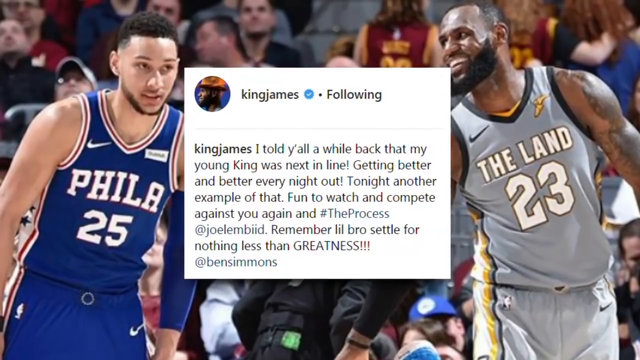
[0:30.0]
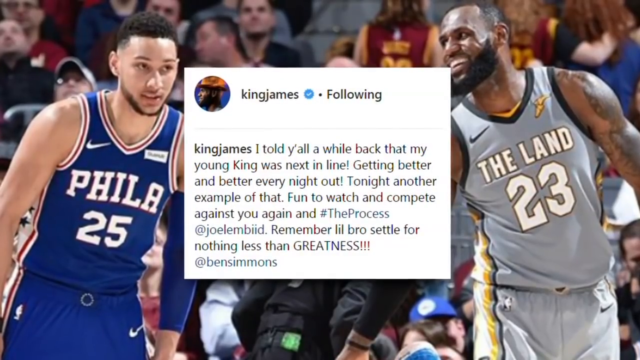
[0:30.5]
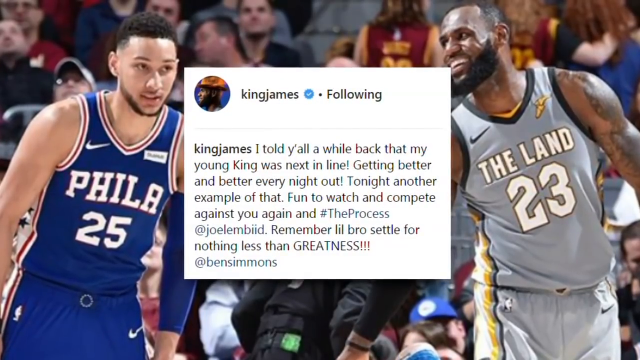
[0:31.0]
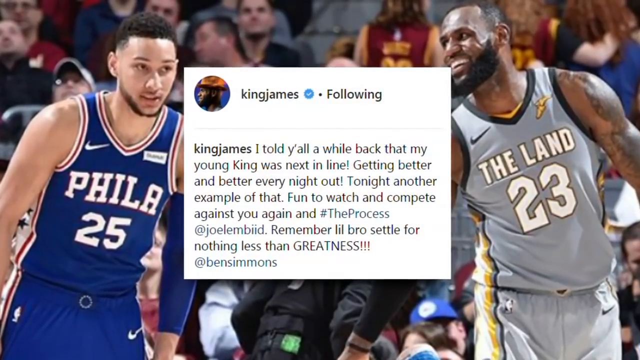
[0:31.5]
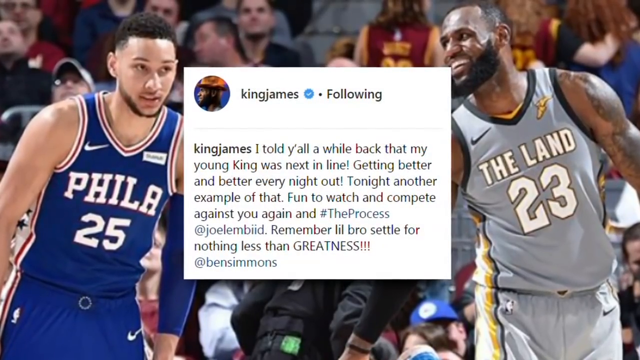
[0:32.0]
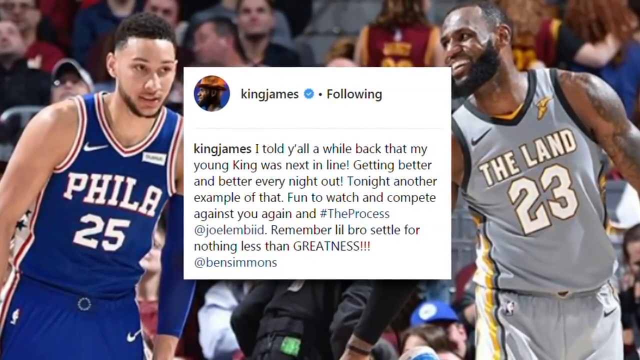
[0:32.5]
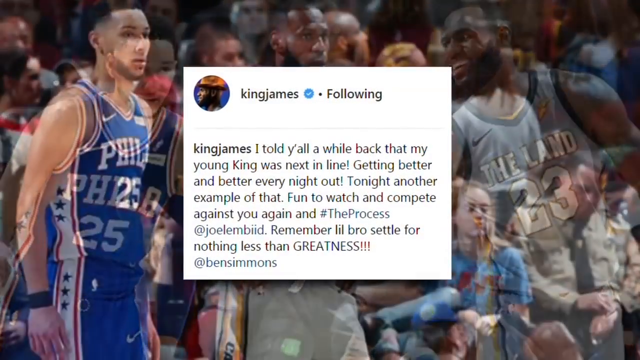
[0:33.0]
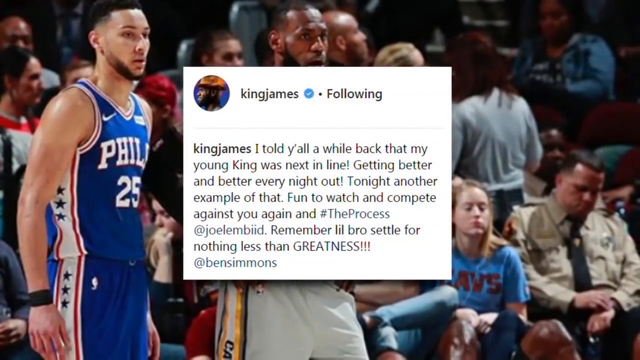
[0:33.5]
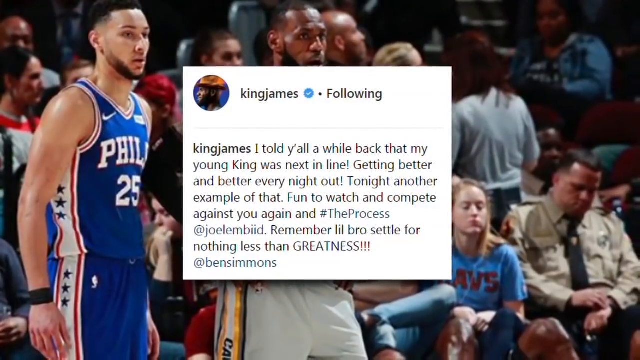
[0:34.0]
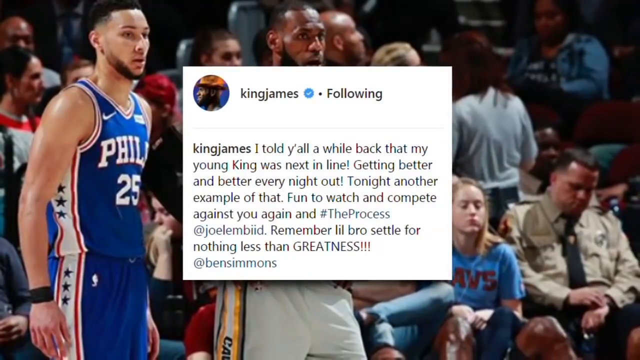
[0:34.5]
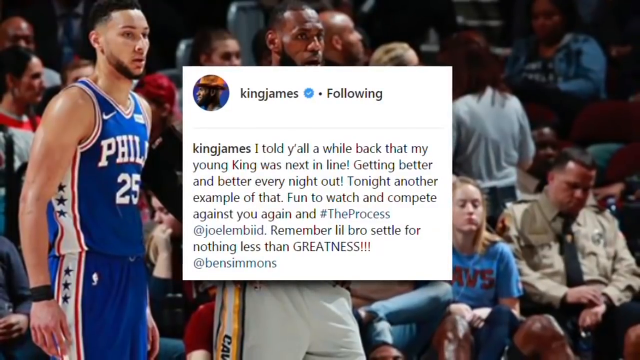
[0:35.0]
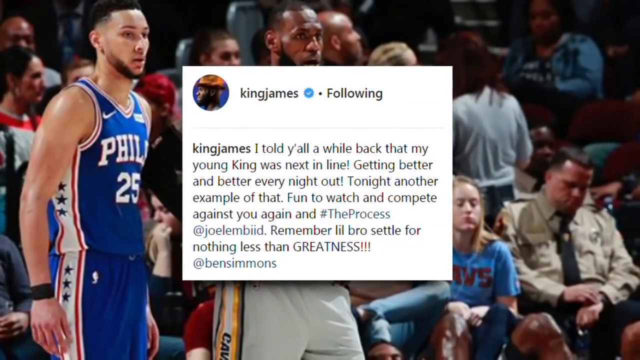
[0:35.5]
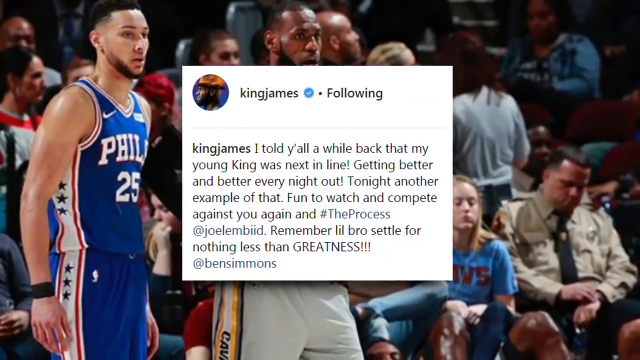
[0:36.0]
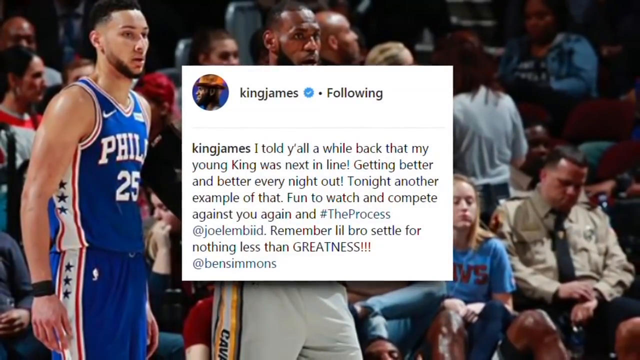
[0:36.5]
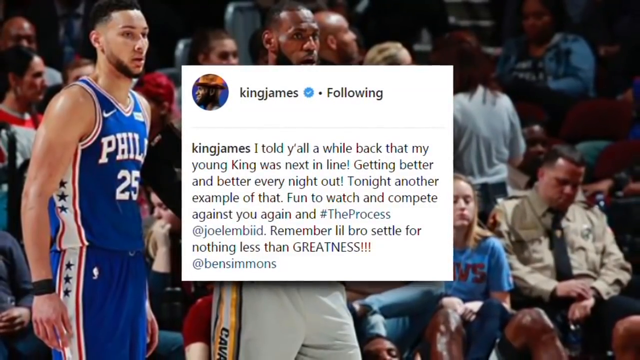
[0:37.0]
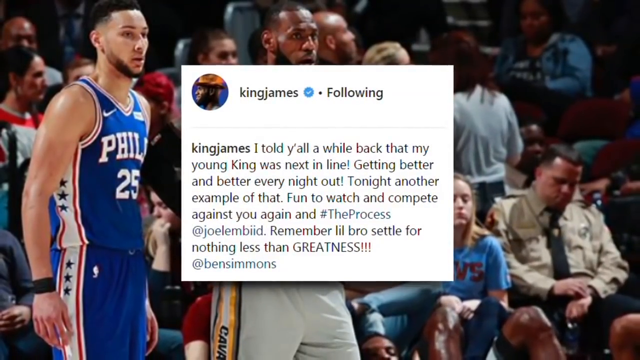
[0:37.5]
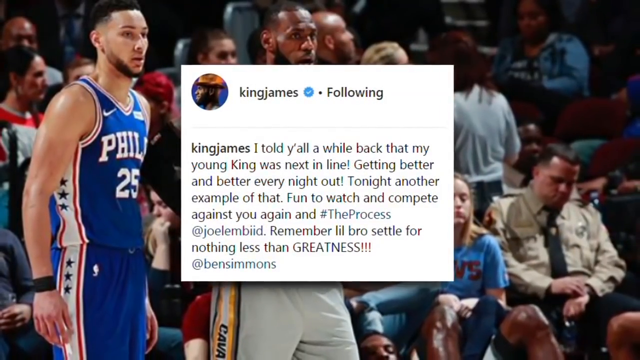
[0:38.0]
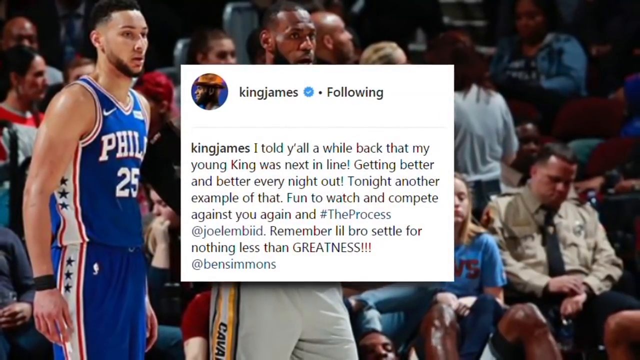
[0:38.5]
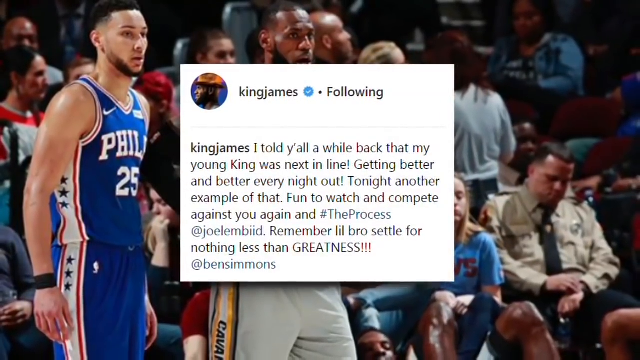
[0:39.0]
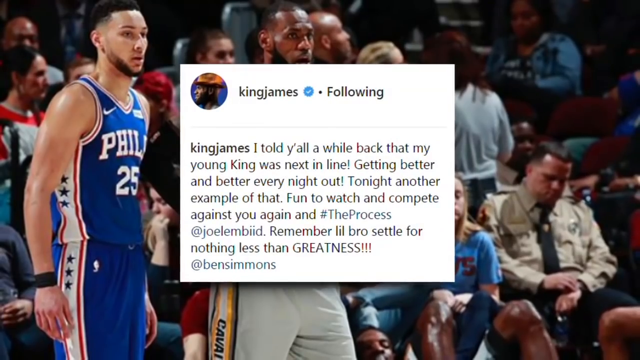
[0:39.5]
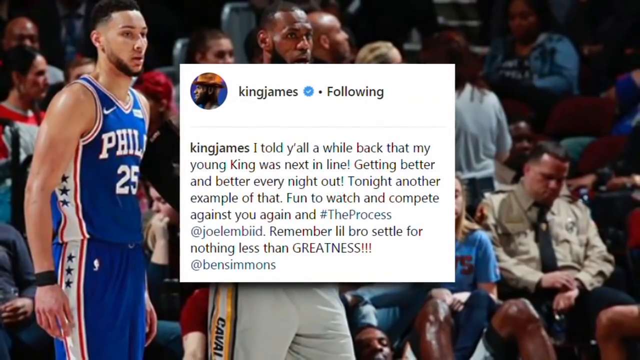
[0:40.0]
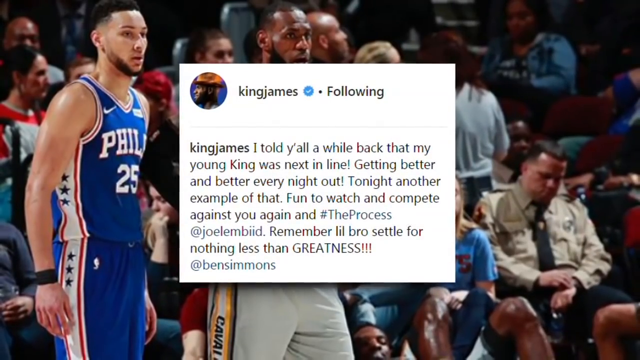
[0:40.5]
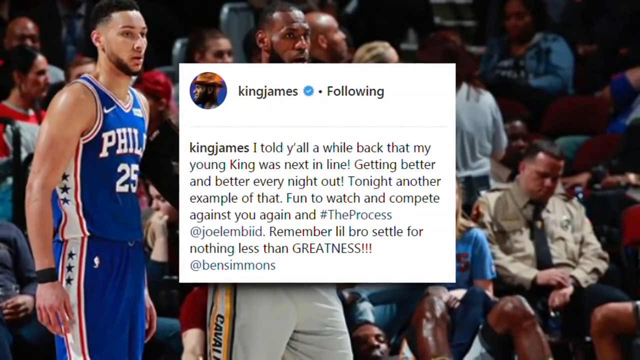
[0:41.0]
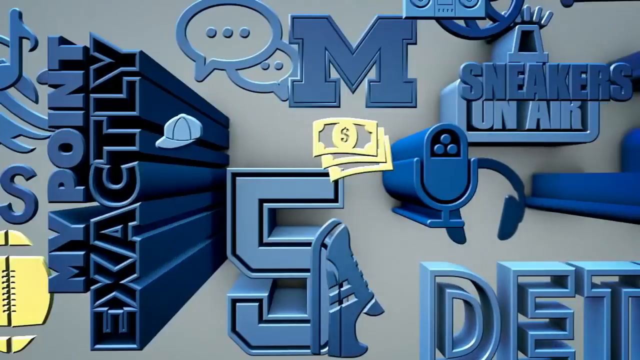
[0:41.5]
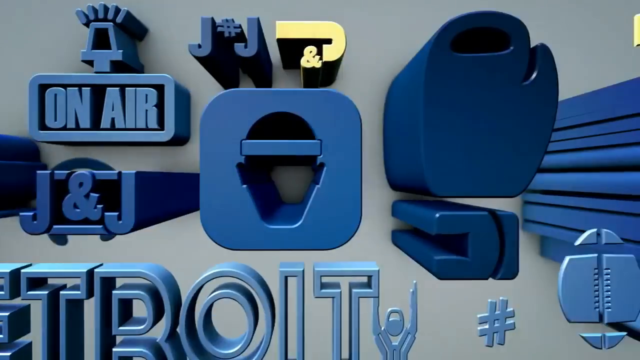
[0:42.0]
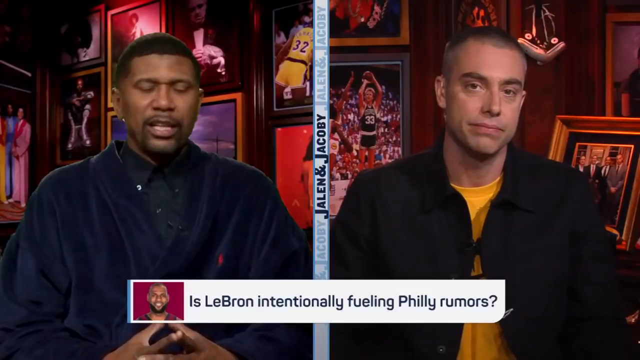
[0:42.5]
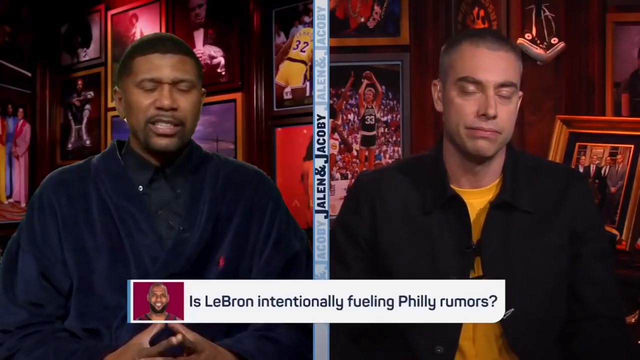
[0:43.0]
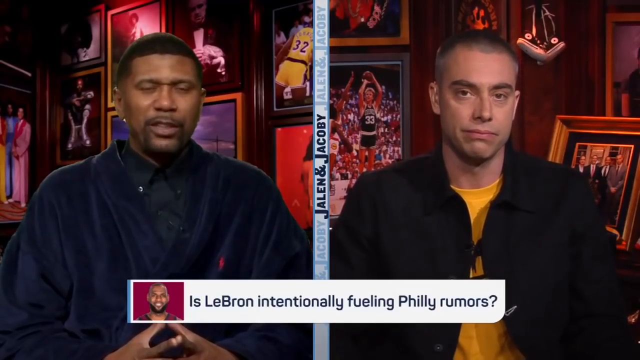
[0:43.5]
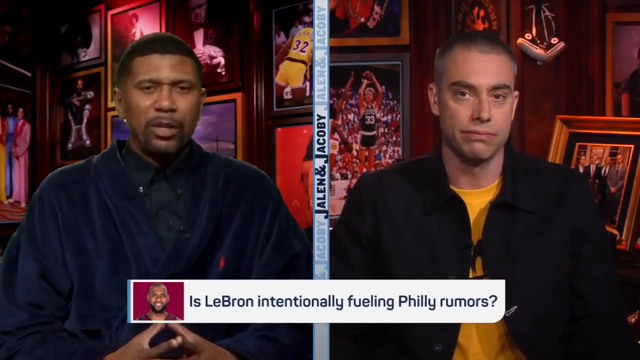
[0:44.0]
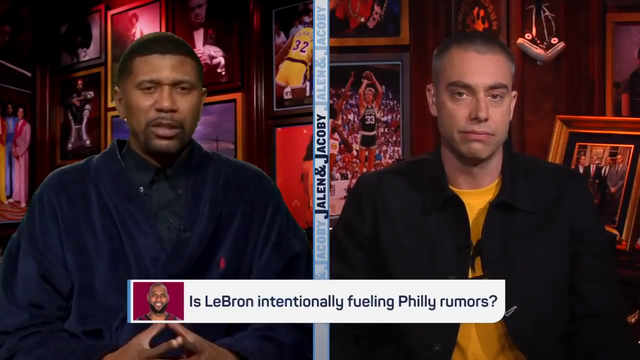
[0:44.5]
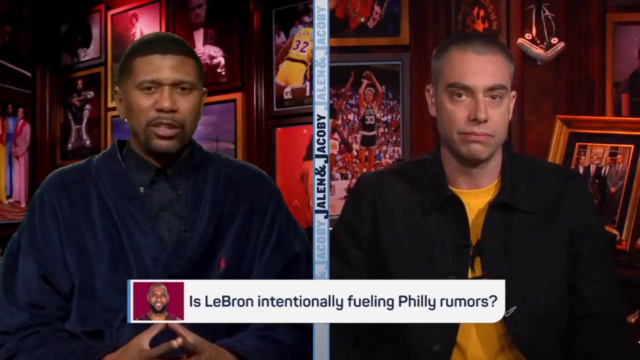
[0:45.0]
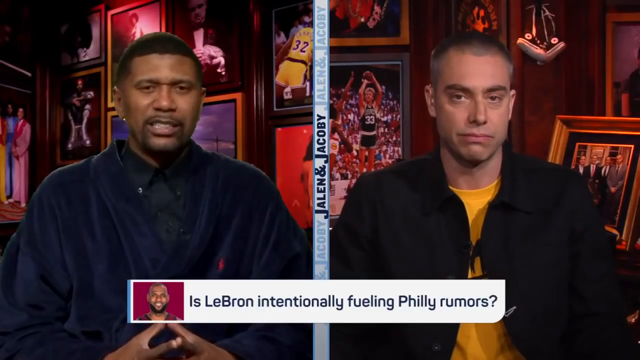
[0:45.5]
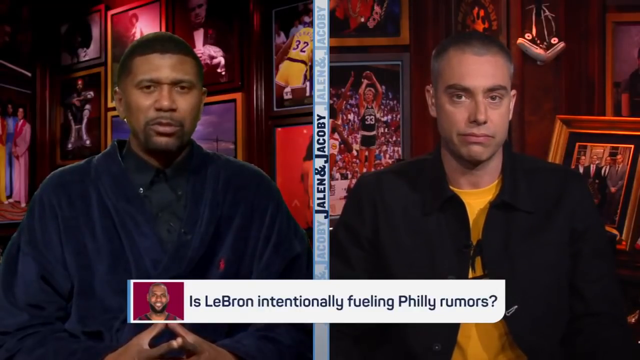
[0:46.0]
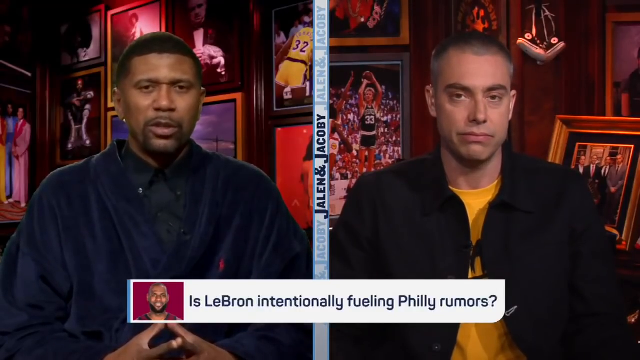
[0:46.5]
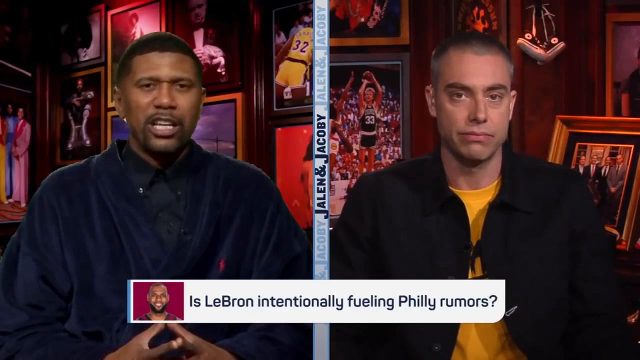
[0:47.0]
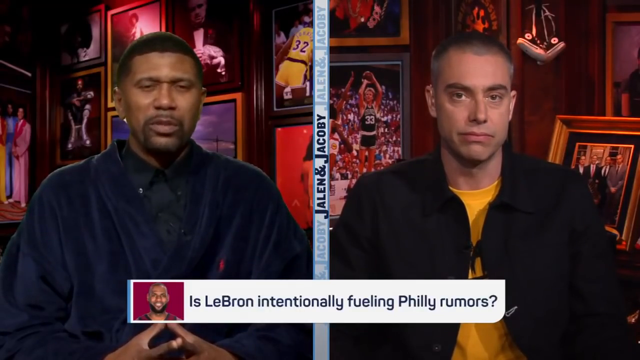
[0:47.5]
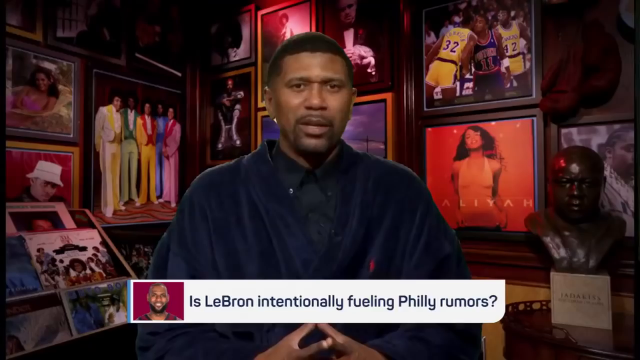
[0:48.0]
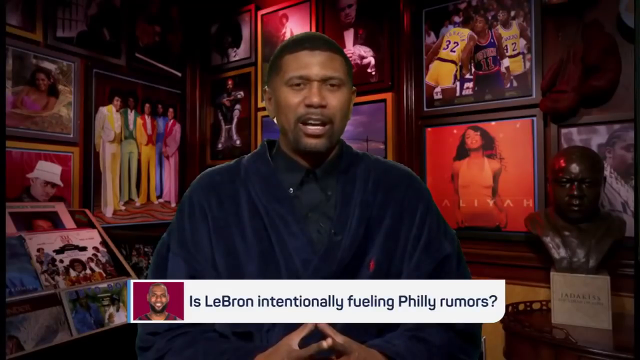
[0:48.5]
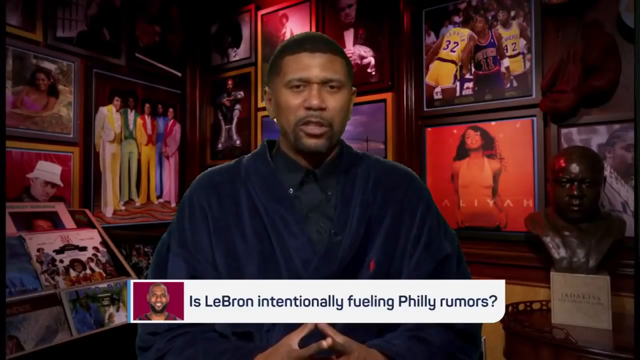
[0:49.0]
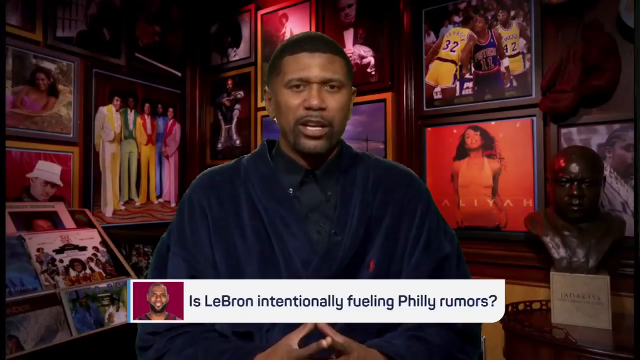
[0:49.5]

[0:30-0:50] A picture of LeBron James on the right shows him in an alternate uniform that says "the land," and a picture on the left shows Ben Simmons, number 25 for the Philadelphia 76ers. In the center of the screen is a tweet from LeBron James: a white box with a blue verified check mark and the name "King James." The tweet reads "I told y'all a while back that my young king was next in line getting better every day. Tonight is another example of that." It also includes "Remember little bros settle for nothing less than greatness" and is signed Ben Simmons. The video then pans back to Jalen Rose.